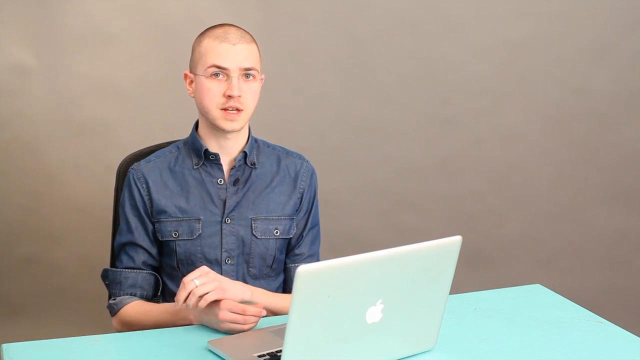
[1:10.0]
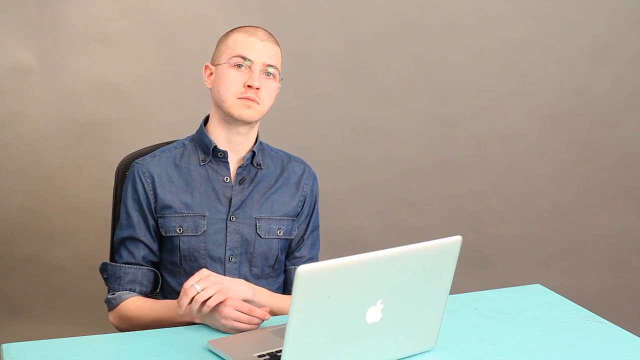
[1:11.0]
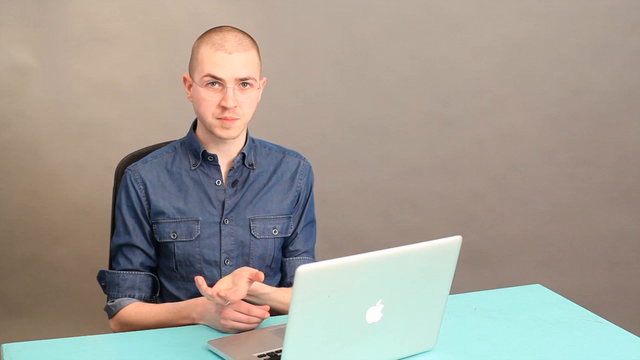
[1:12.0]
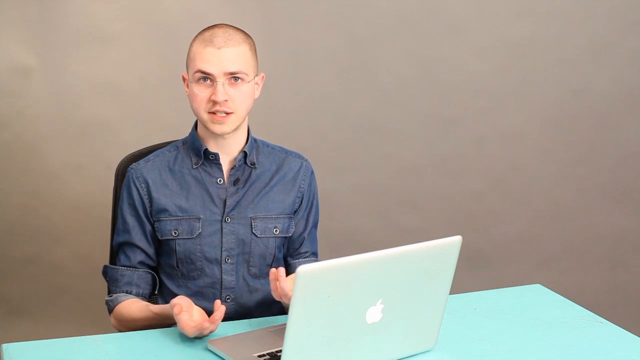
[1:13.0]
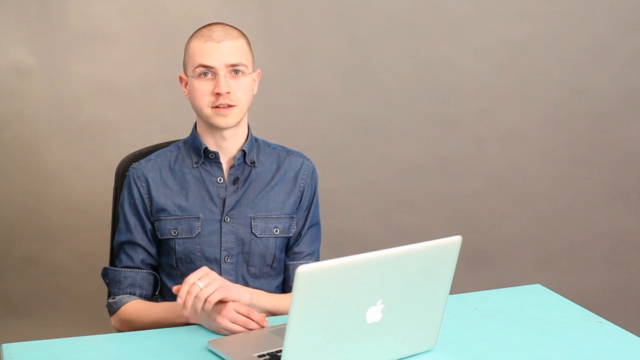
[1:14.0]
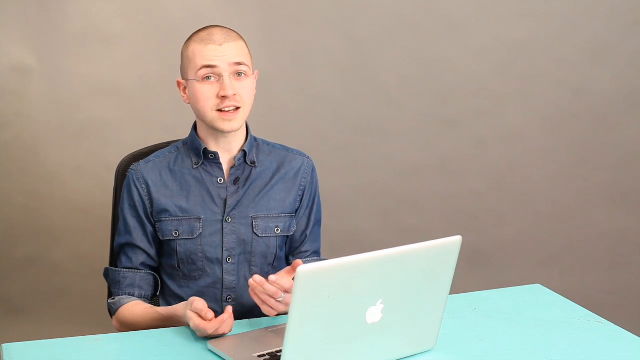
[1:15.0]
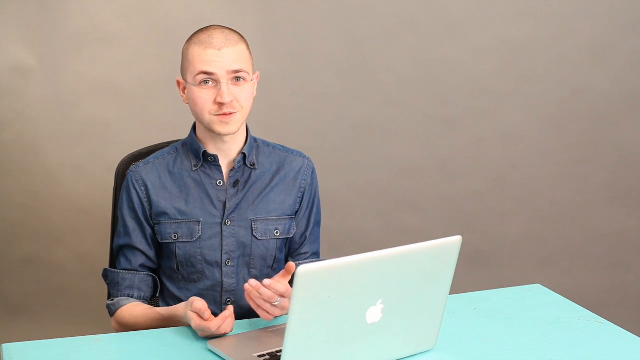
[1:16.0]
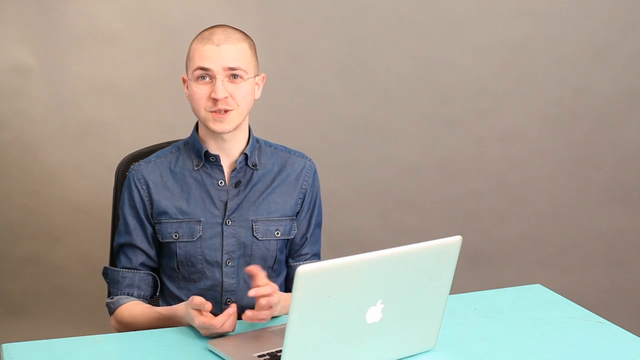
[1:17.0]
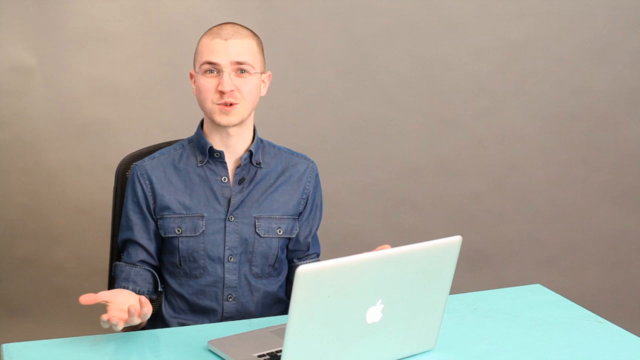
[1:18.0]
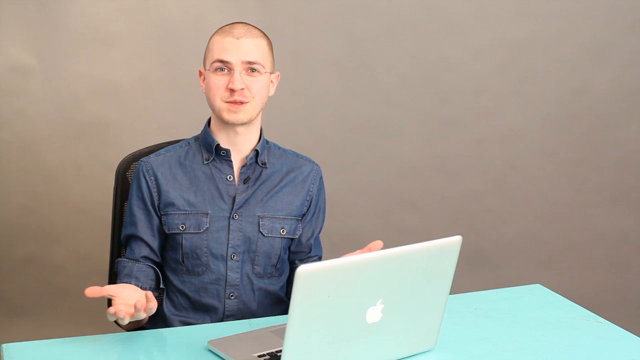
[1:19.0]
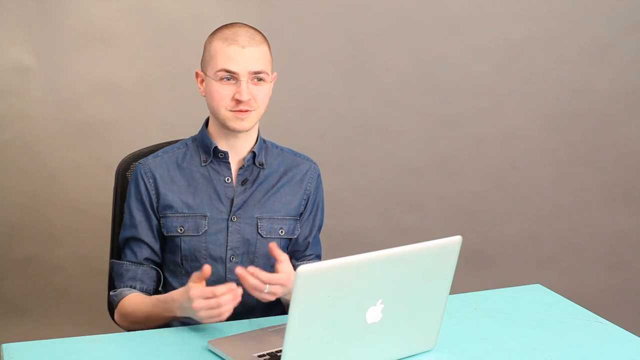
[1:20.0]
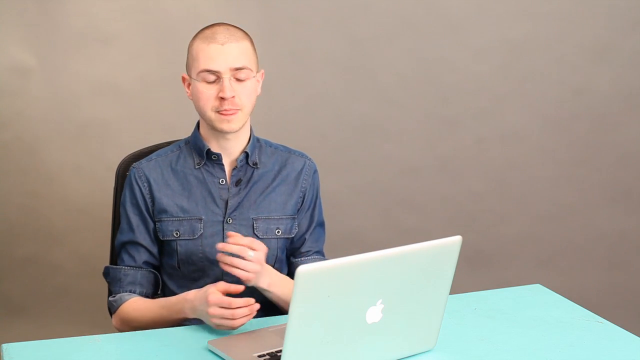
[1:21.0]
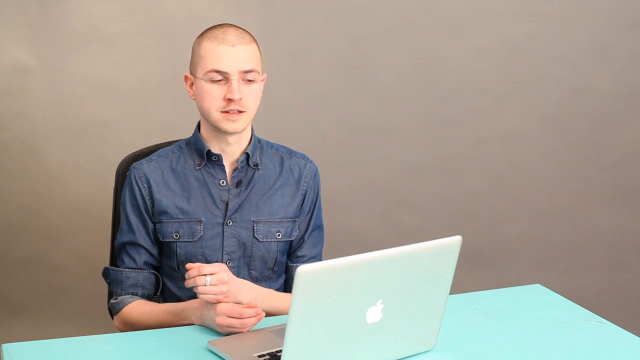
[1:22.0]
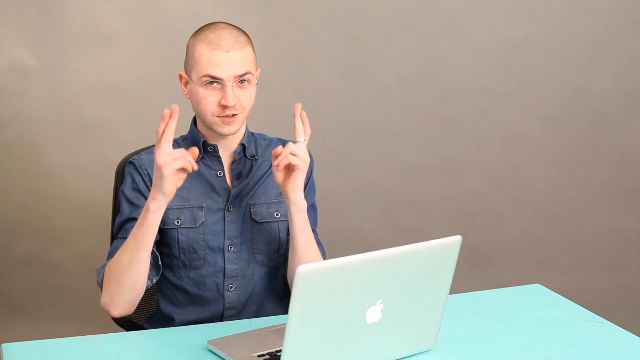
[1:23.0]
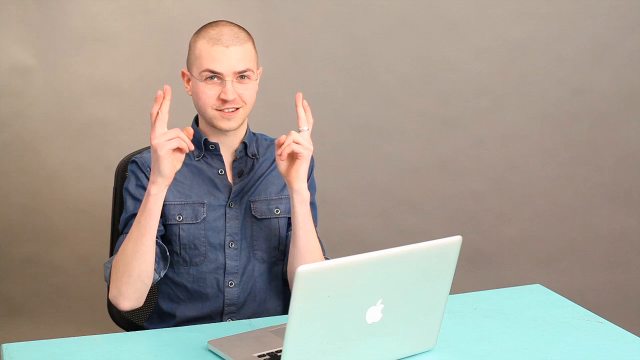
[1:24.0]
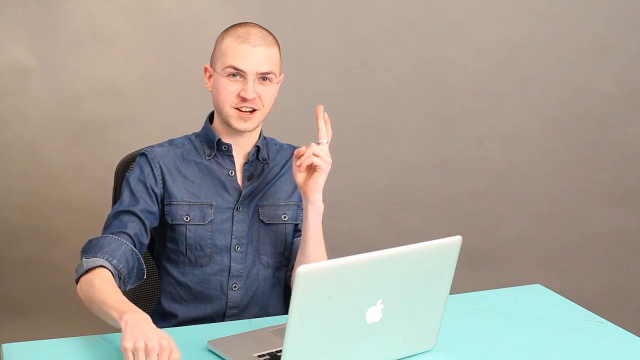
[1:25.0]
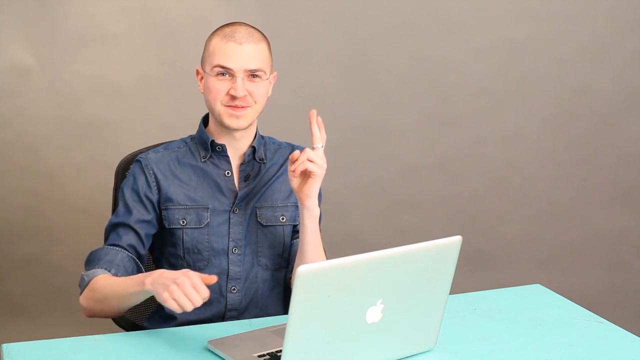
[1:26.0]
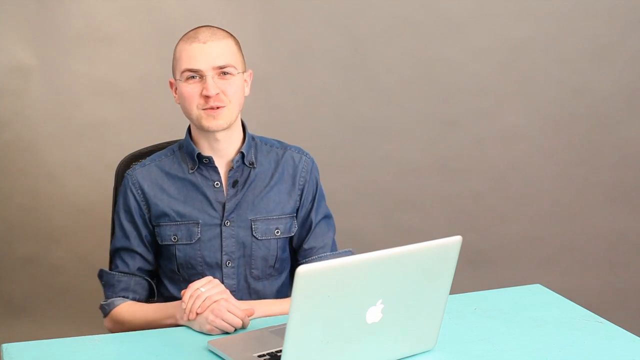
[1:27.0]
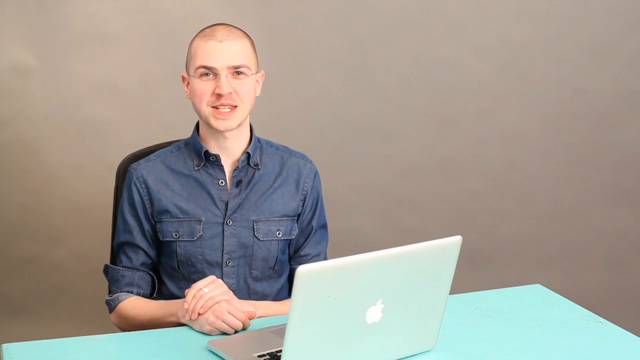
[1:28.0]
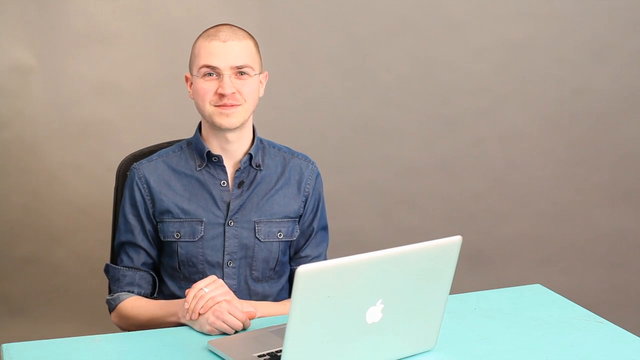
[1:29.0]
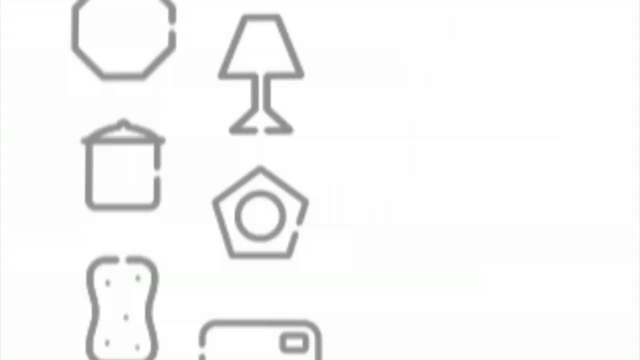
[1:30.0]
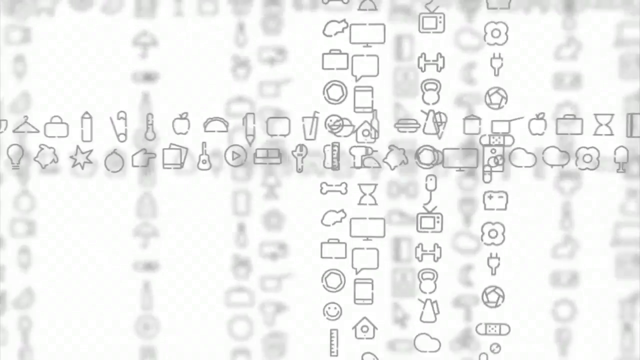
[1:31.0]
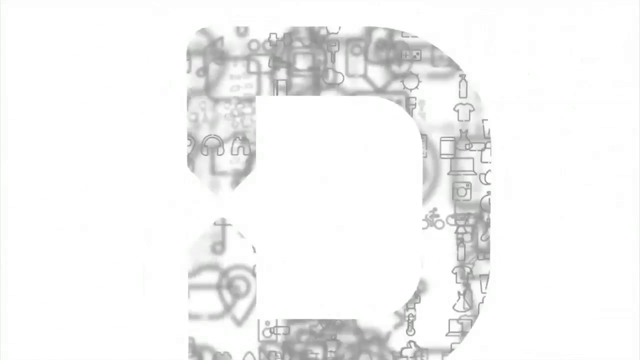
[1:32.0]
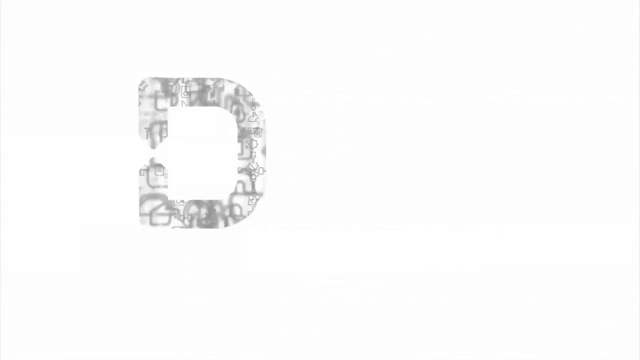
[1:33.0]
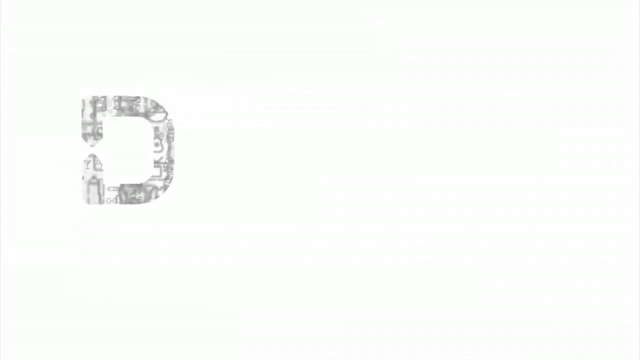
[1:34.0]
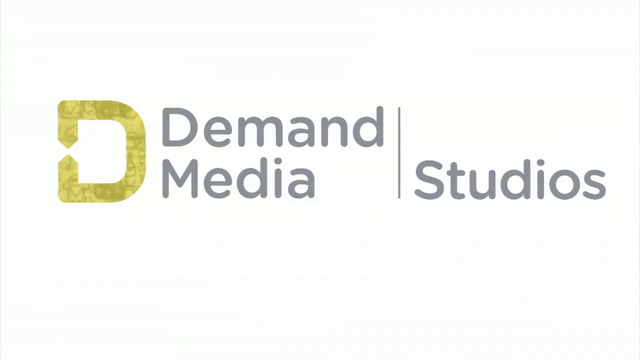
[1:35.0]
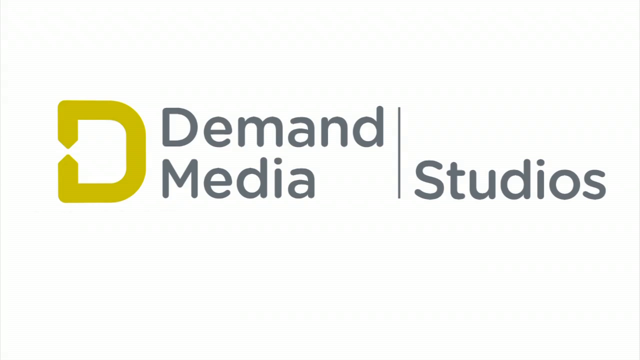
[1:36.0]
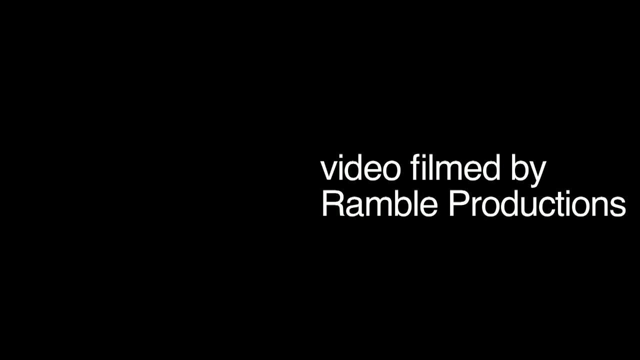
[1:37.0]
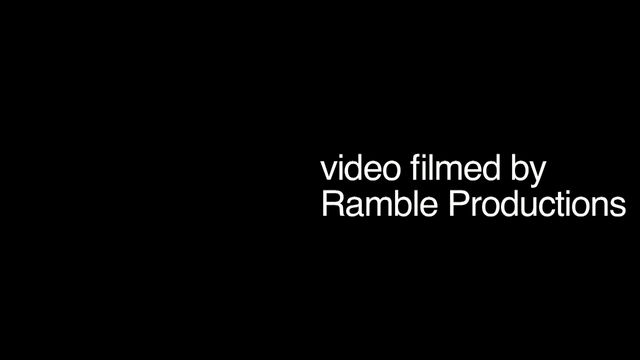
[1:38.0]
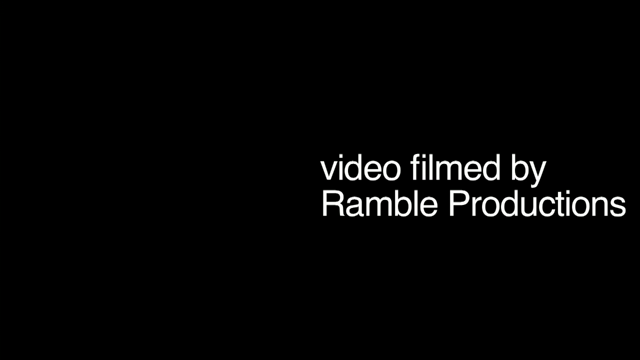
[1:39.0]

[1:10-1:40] Skyler Kelly, a Caucasian male of about 20 to 25, is in view with his Mac laptop, which has the Apple logo on it, on the light side of the desk. He is sitting in what seems to be a black chair and wears a blue denim shirt and glasses, with short red hair. He is kind of discussing something and makes hand gestures. The screen then transitions to a white screen with a number of photos and the letter D, then "Demand Media Studios" pops up on a kind of white screen with some information. Finally it transitions to a black screen with white text that says "Video Film High Ground Productions".